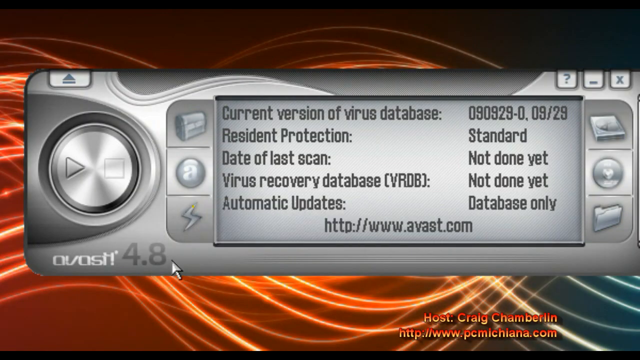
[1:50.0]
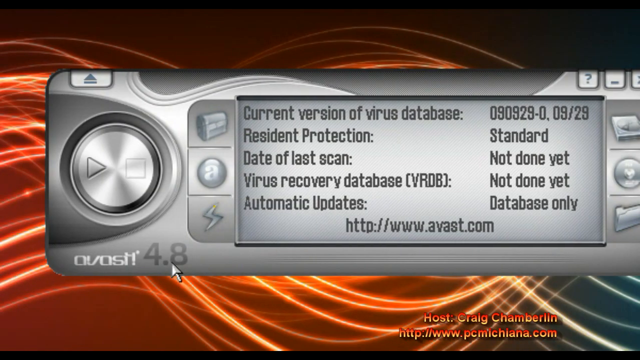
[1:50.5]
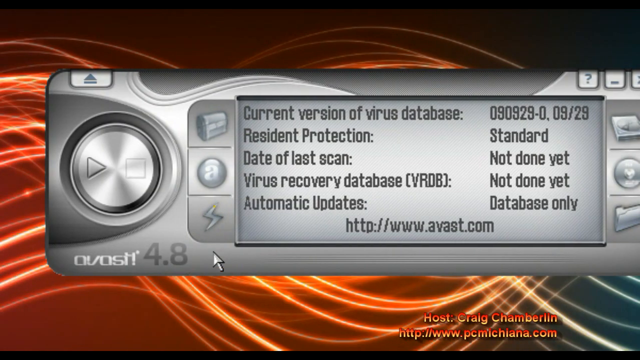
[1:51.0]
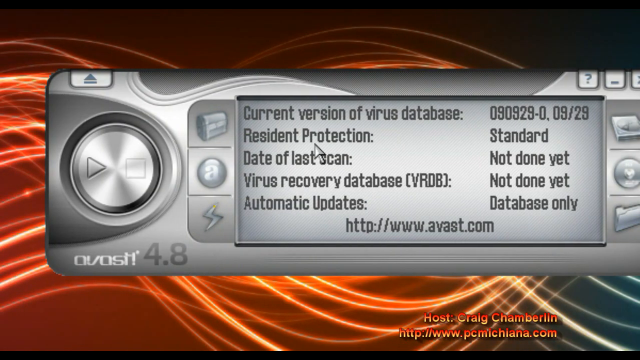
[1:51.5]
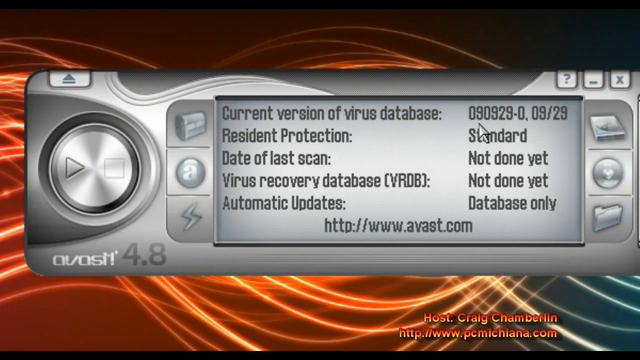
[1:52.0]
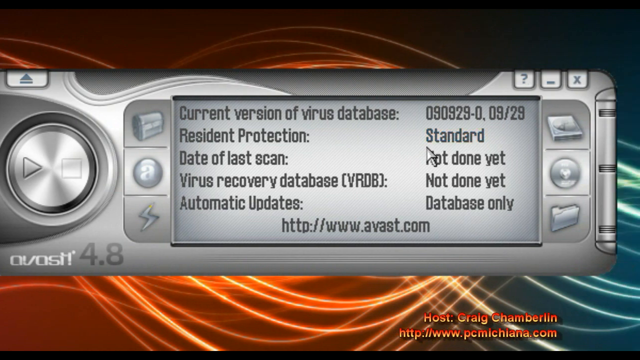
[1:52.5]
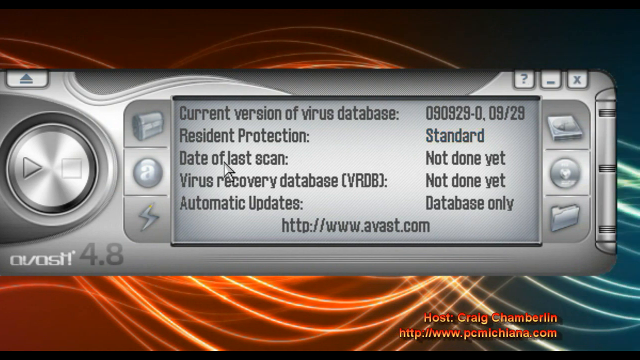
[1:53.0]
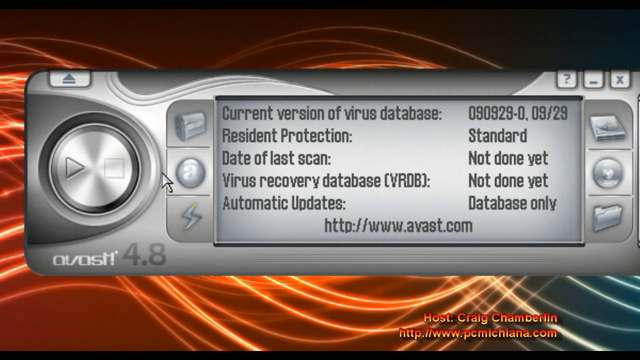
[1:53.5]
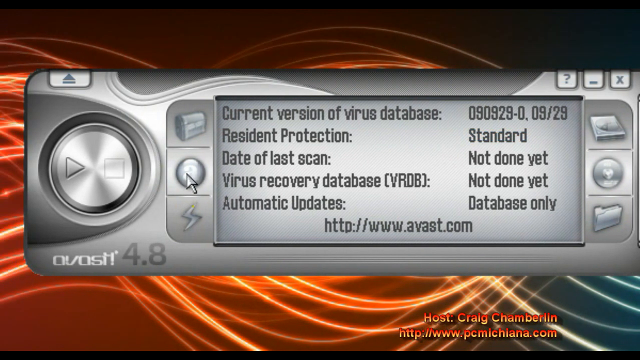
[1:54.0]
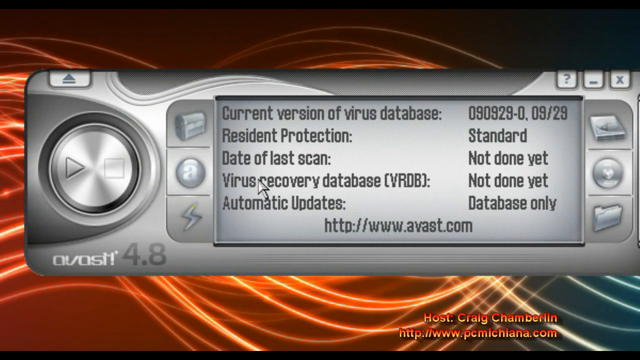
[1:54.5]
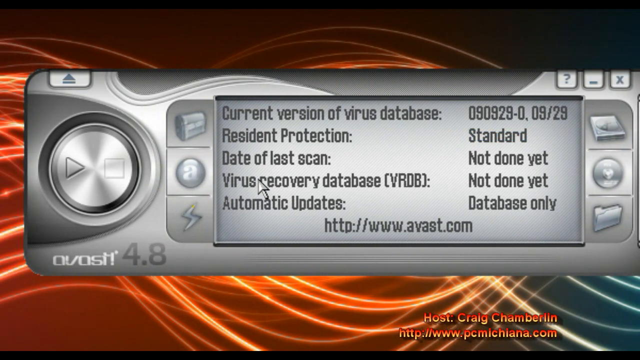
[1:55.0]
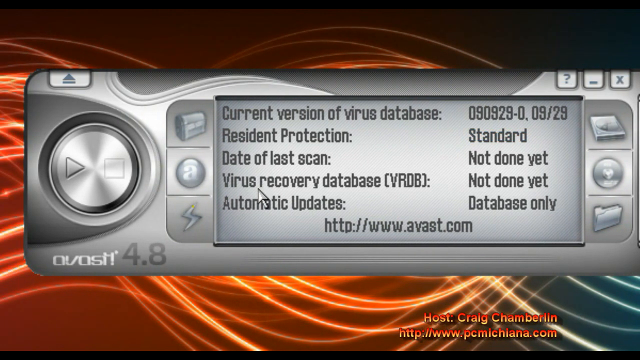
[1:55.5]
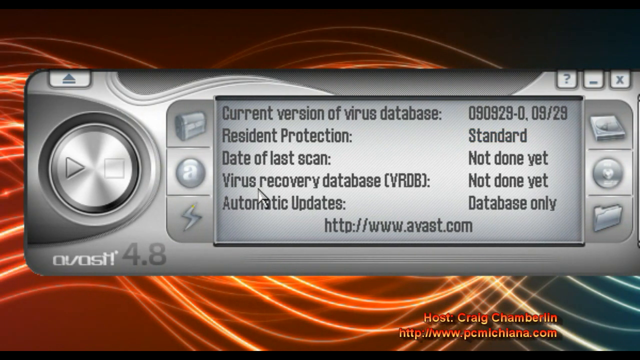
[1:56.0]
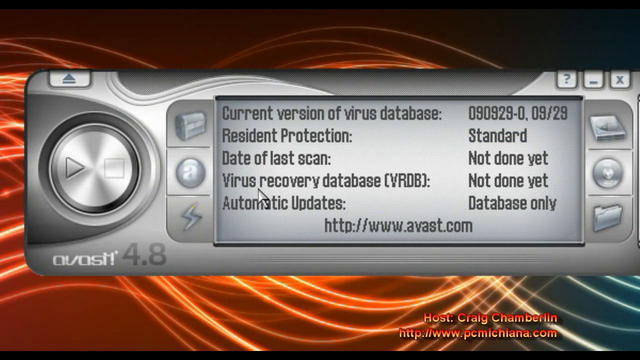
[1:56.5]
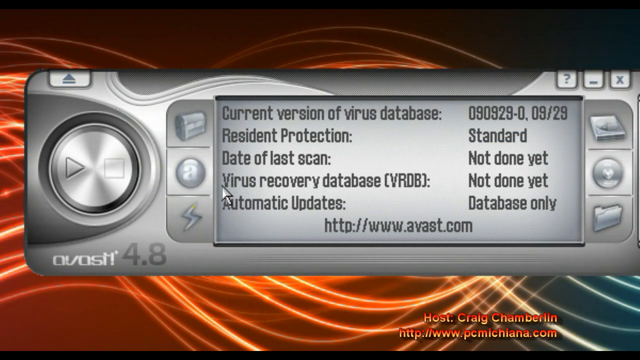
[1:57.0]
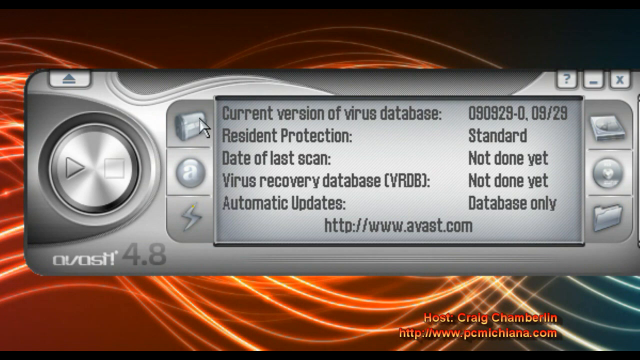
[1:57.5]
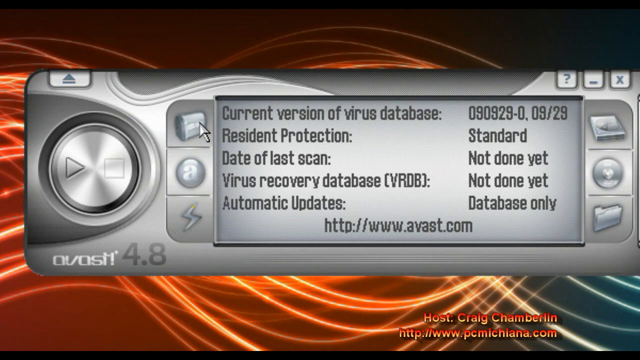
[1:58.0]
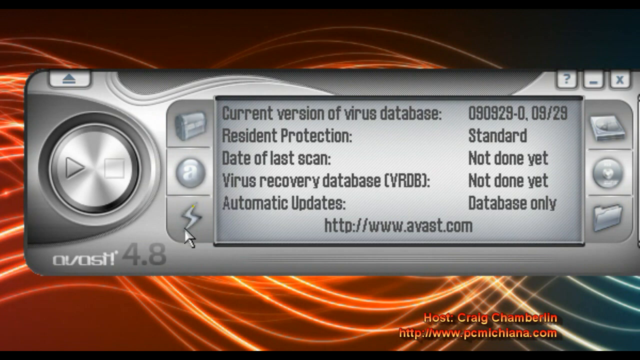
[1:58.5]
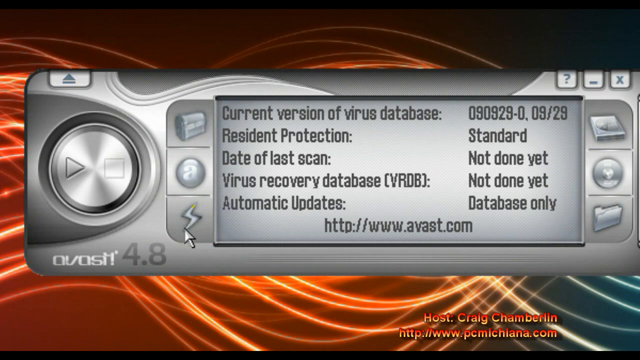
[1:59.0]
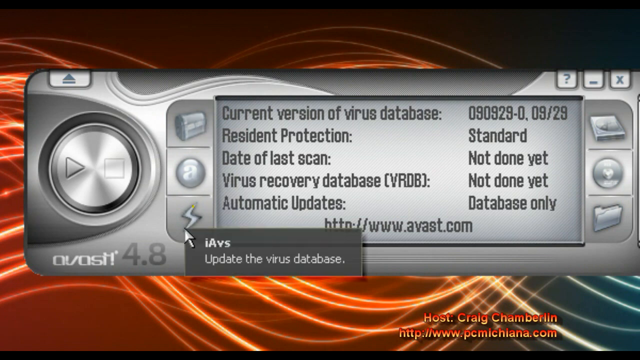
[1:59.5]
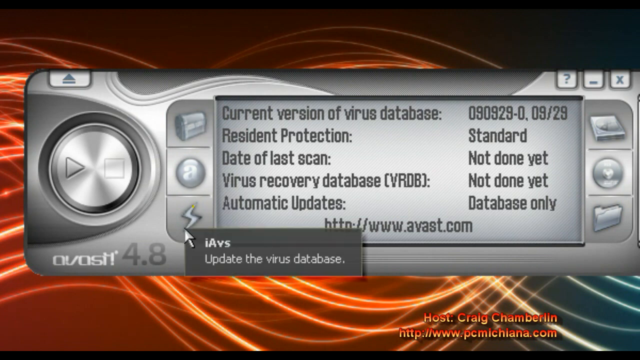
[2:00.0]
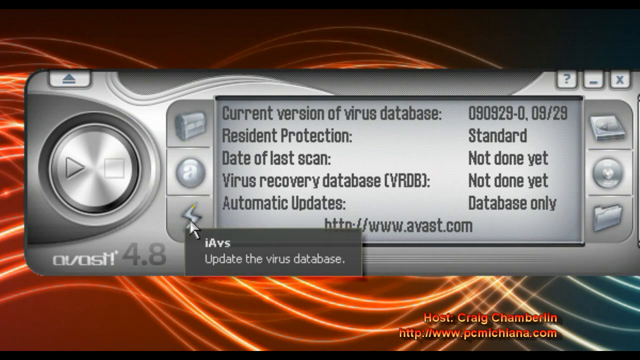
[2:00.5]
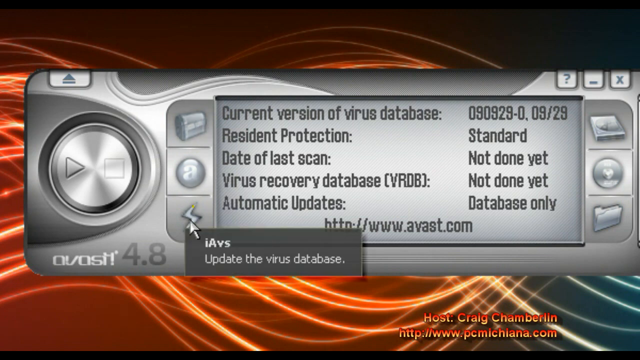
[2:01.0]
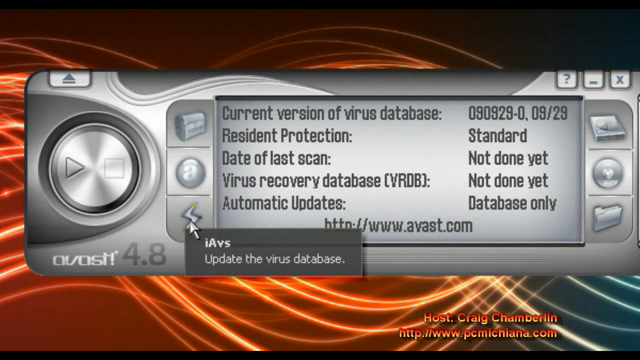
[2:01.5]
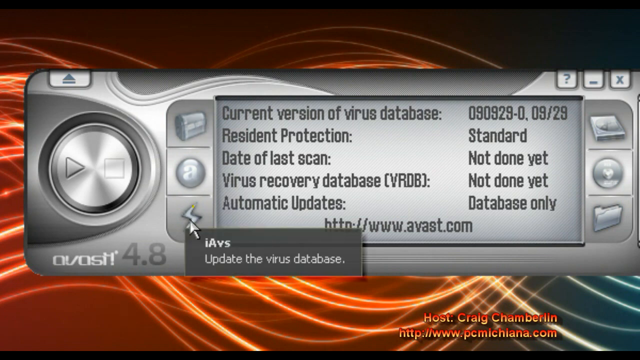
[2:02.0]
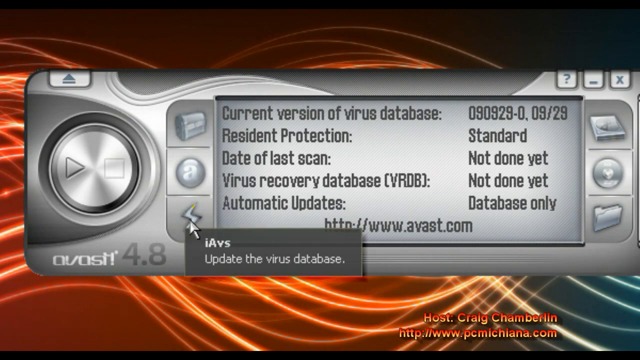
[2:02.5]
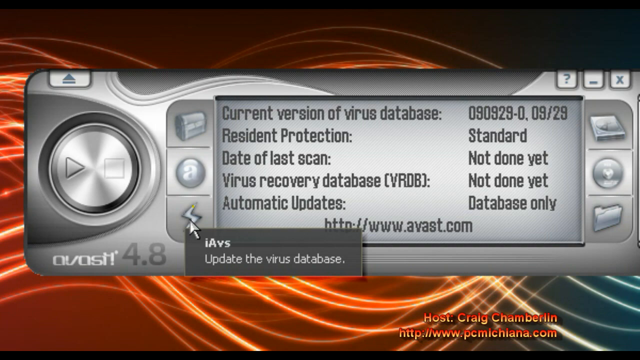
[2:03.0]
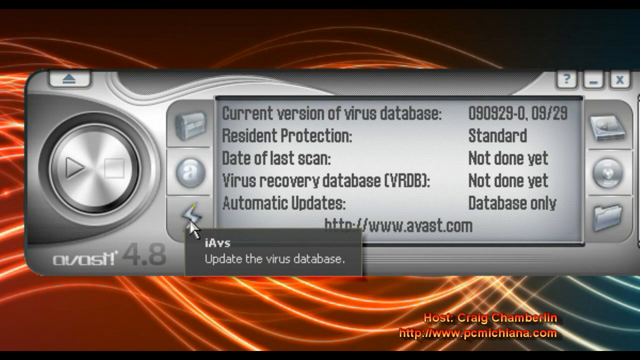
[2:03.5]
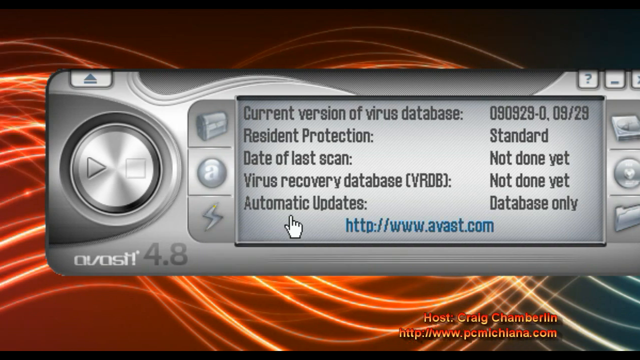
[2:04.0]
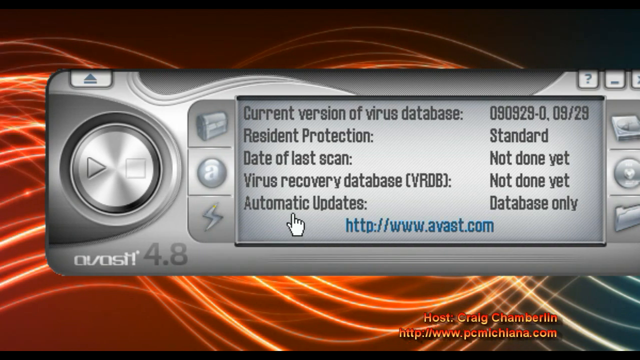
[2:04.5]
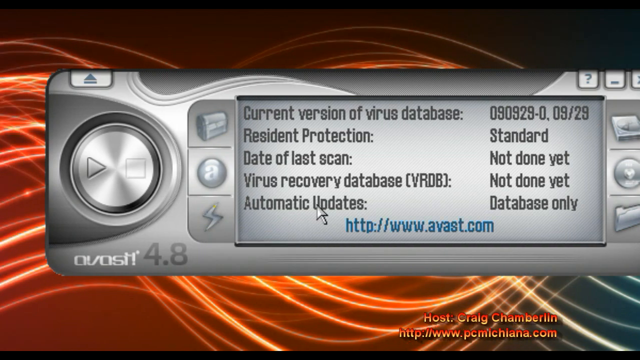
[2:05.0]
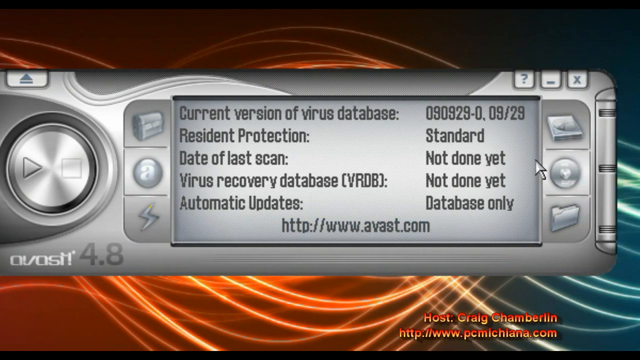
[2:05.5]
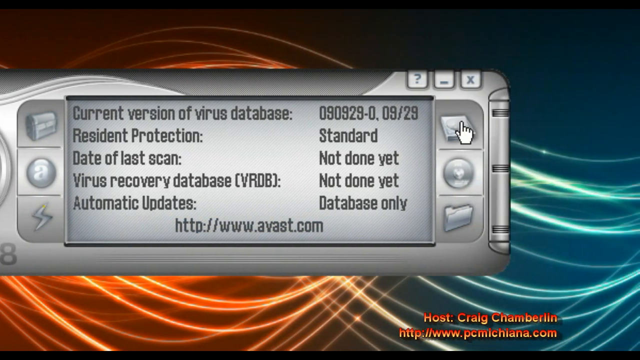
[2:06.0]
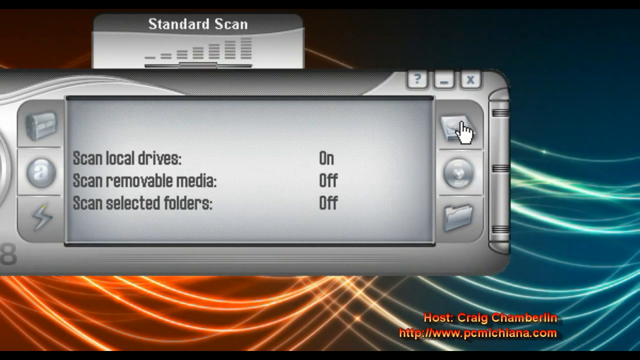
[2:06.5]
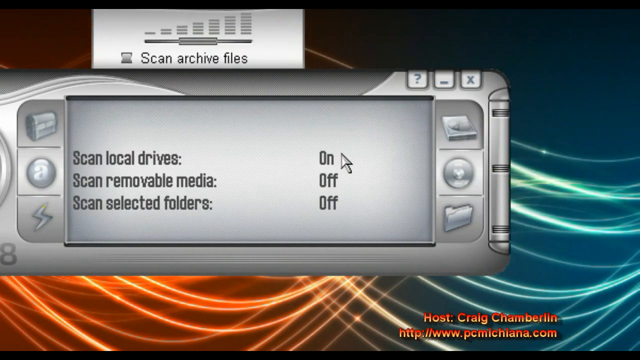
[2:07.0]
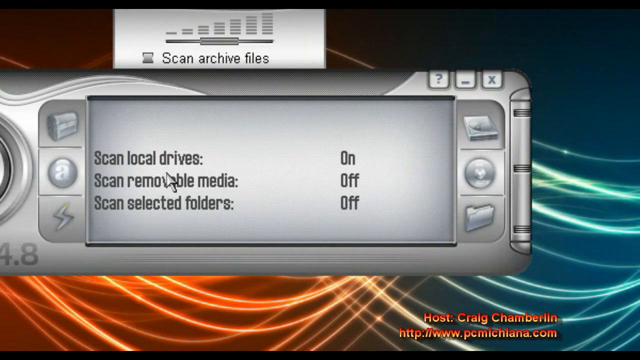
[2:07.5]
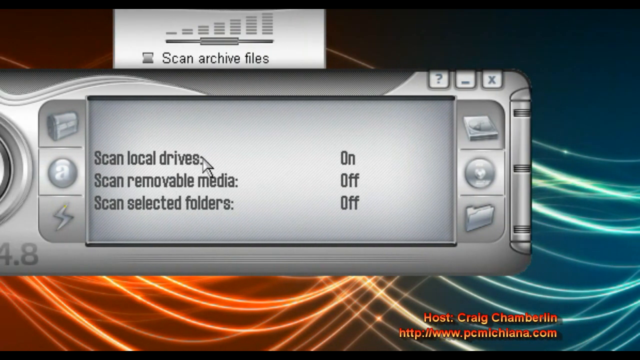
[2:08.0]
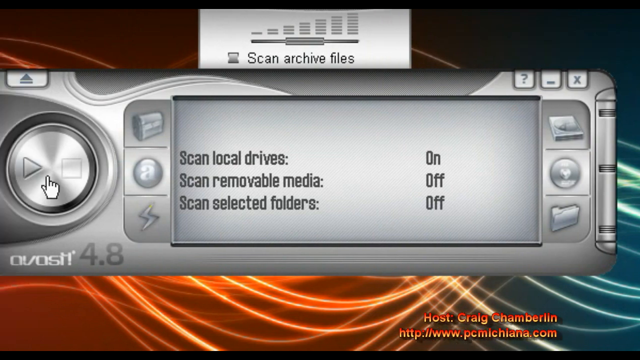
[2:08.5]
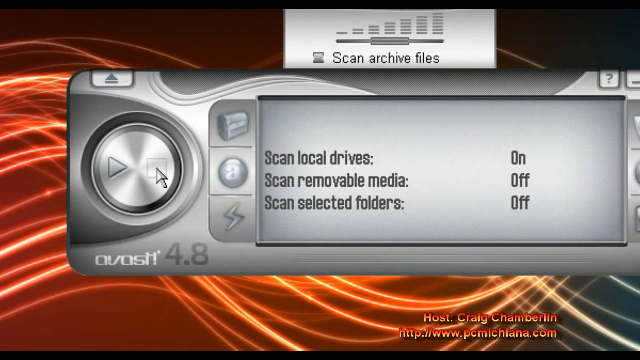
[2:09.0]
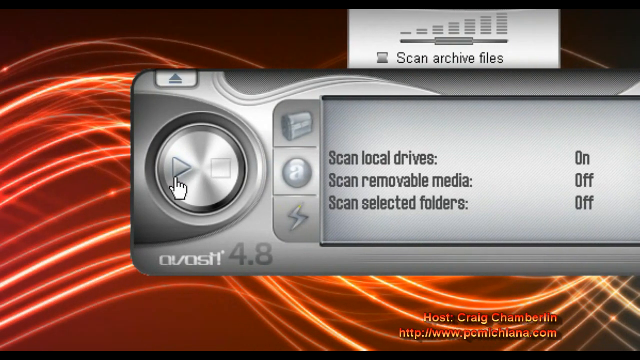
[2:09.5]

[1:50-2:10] The grey console of the antivirus software is rectangular, with a circular play button on the left and a rectangular box containing square buttons down the left-hand side: one looks like a globe, one like a circle with an A in it, one is a lightning bolt, and one looks almost like a folder structure, though it is not totally clear. The cursor hovers around and then clicks on what looks like "iAVS, update the virus database". It then moves across and clicks another button with a similar setup on the other side, and then the play button is pressed. Everything in the console is grey-toned, in black, white and greyish shades, while the computer's background is swirly lights in oranges and blues. A scan is set off, with scan archive files, apparently started by the play button. The cursor then hovers around. The console has quite a few interesting shapes throughout.